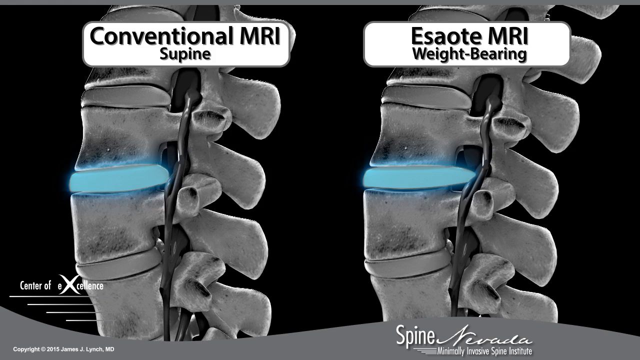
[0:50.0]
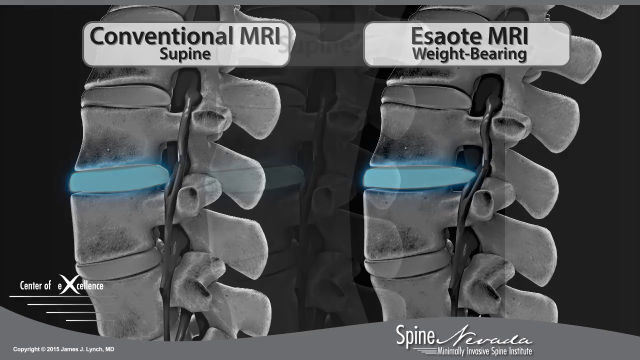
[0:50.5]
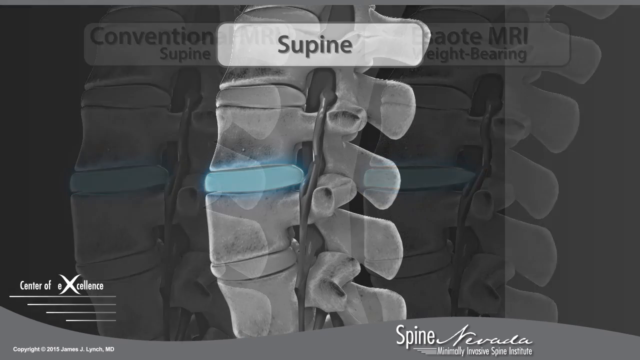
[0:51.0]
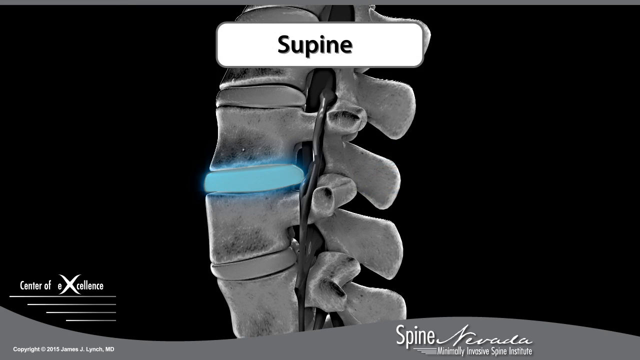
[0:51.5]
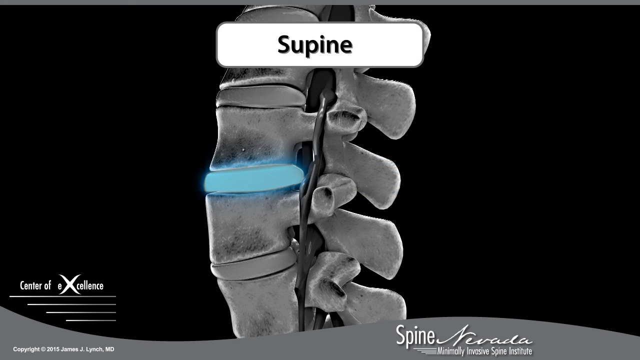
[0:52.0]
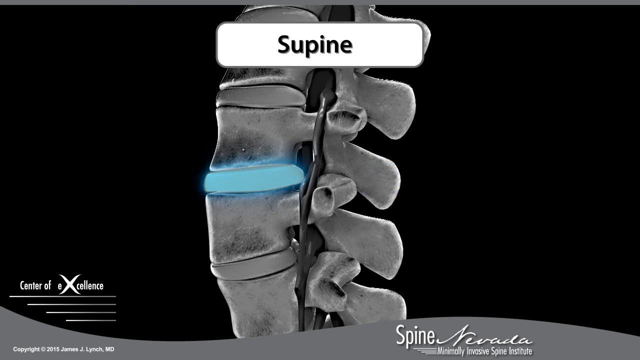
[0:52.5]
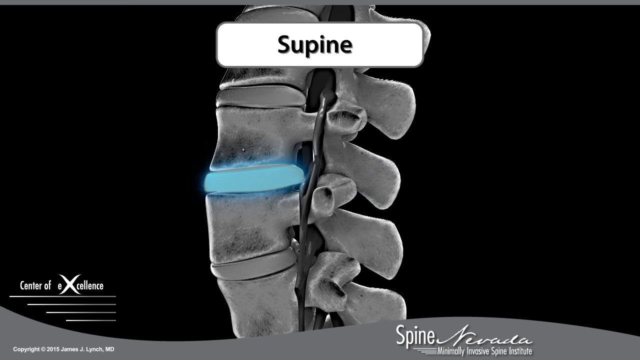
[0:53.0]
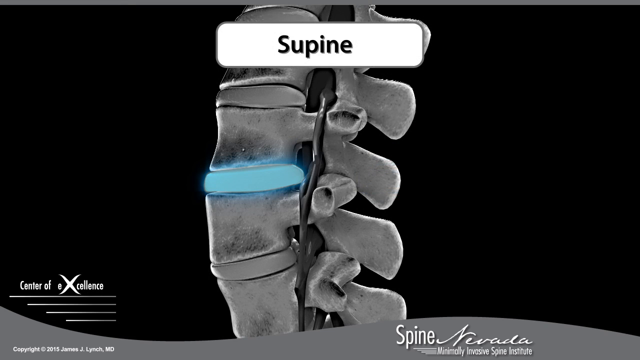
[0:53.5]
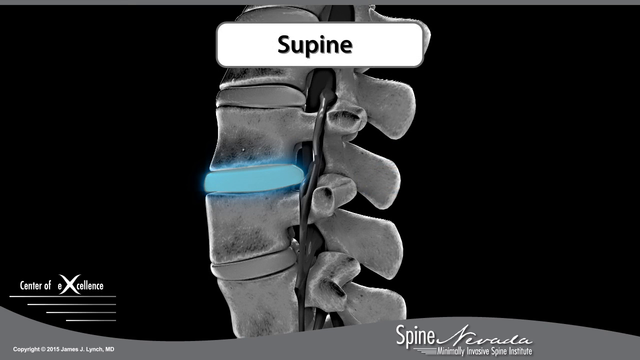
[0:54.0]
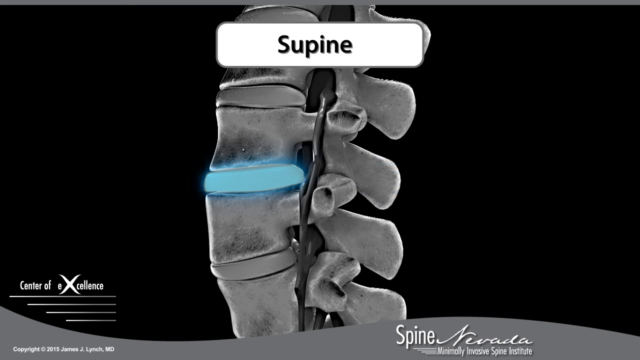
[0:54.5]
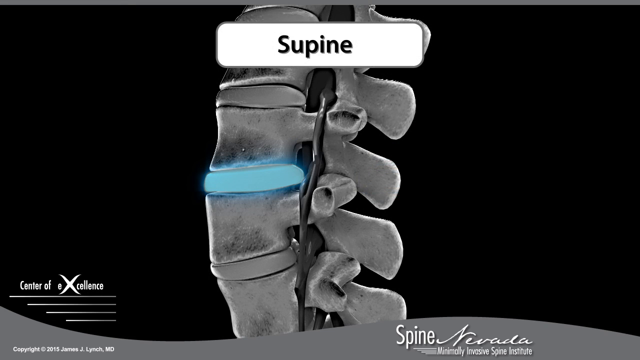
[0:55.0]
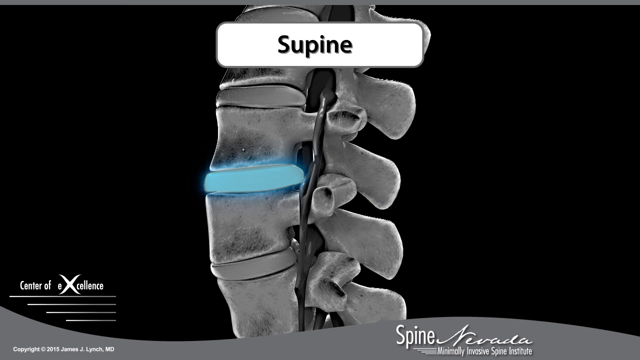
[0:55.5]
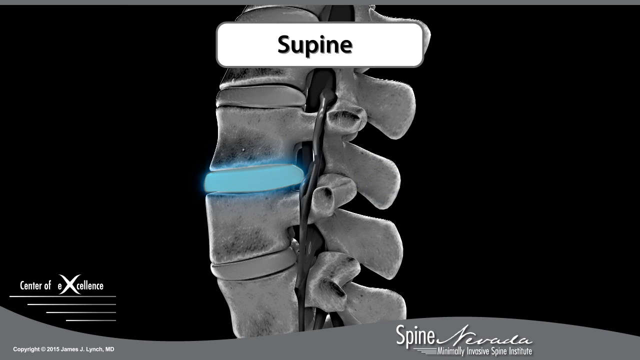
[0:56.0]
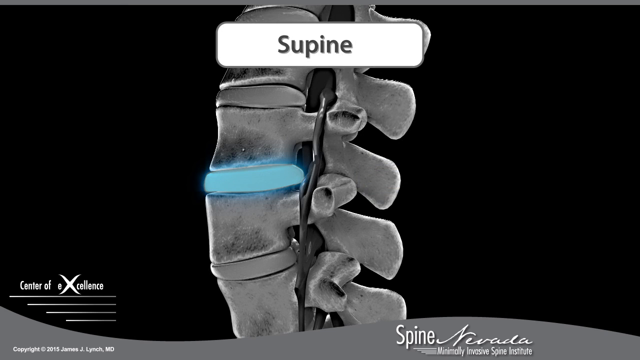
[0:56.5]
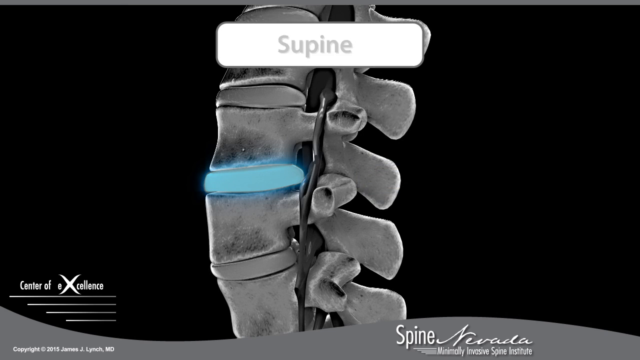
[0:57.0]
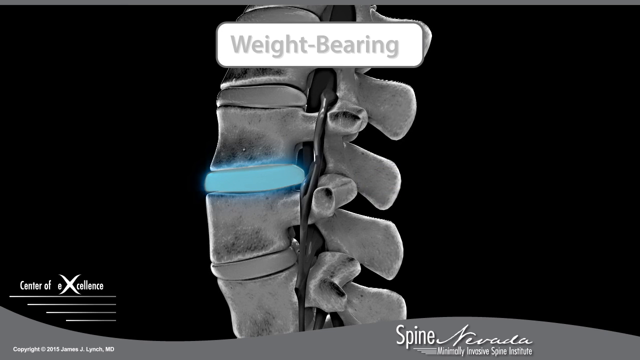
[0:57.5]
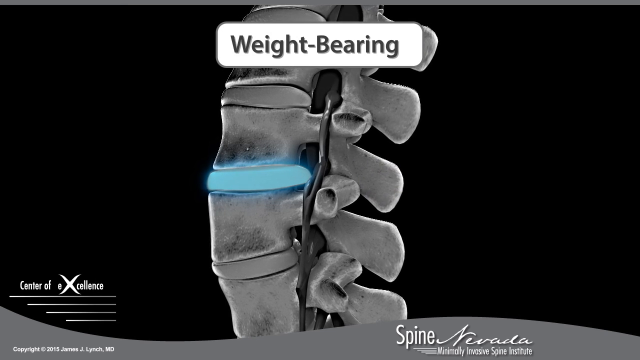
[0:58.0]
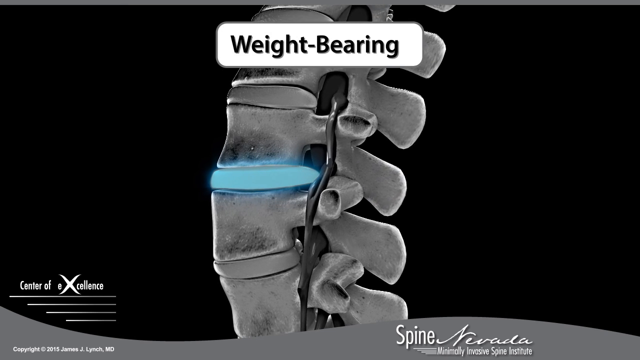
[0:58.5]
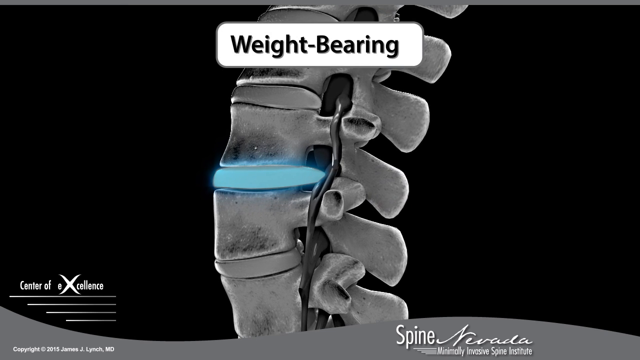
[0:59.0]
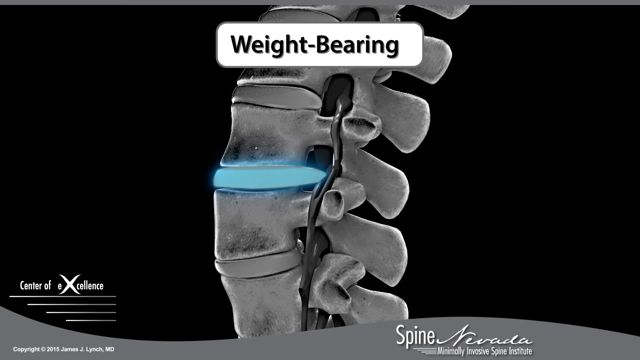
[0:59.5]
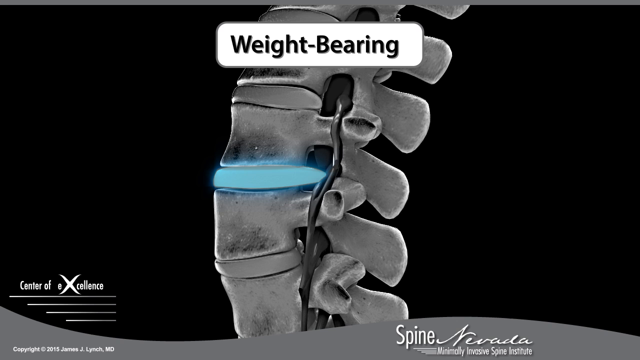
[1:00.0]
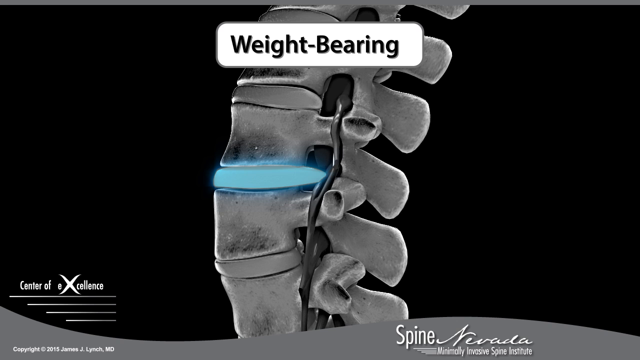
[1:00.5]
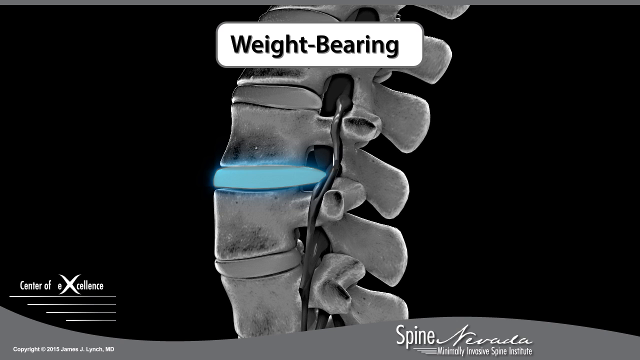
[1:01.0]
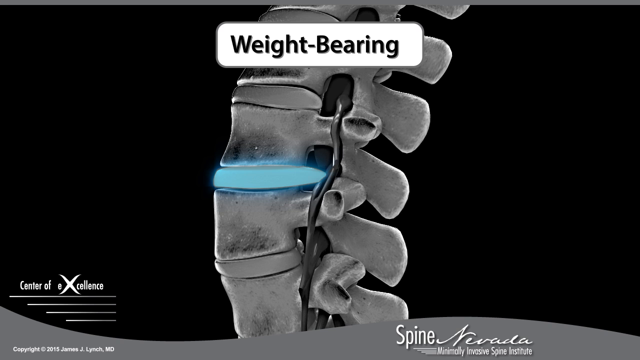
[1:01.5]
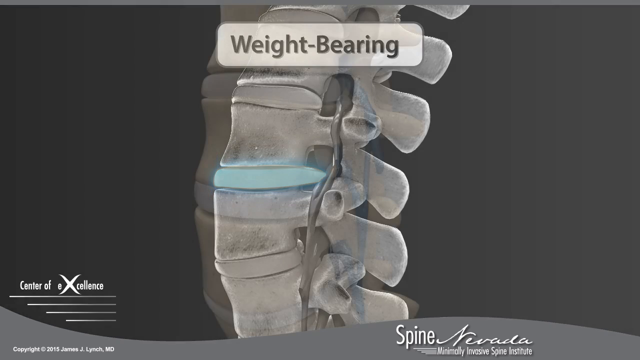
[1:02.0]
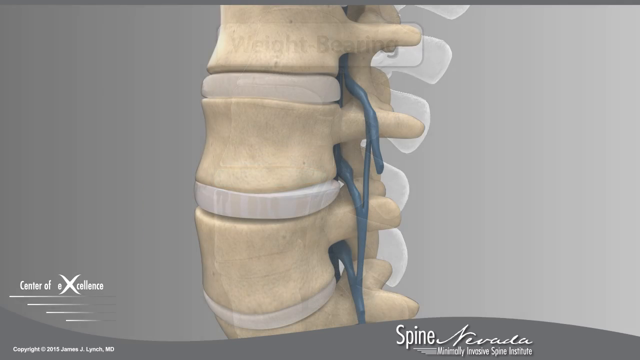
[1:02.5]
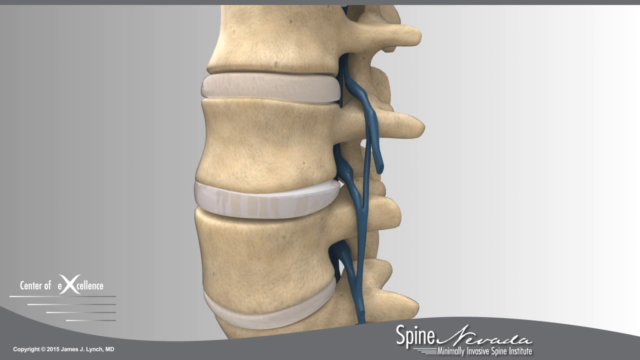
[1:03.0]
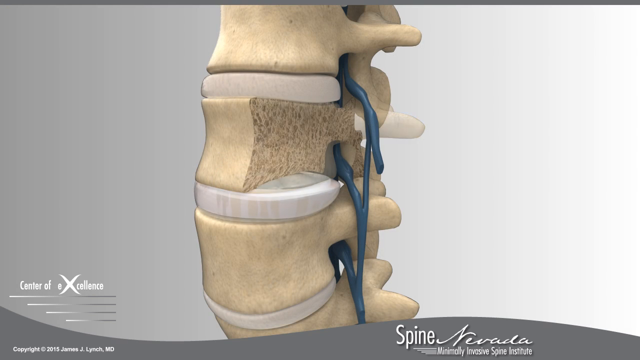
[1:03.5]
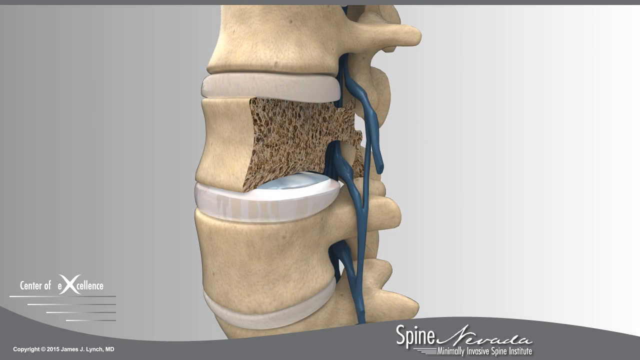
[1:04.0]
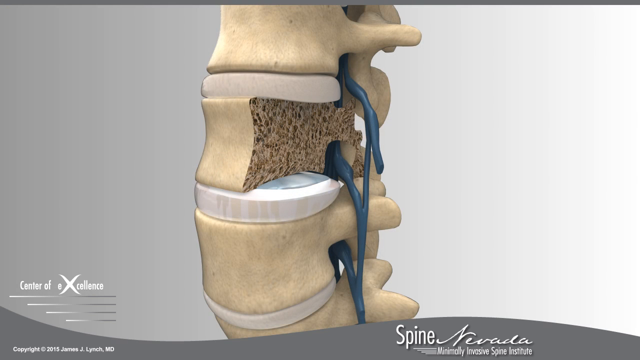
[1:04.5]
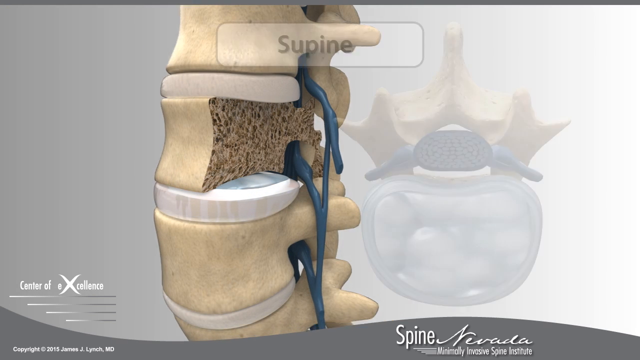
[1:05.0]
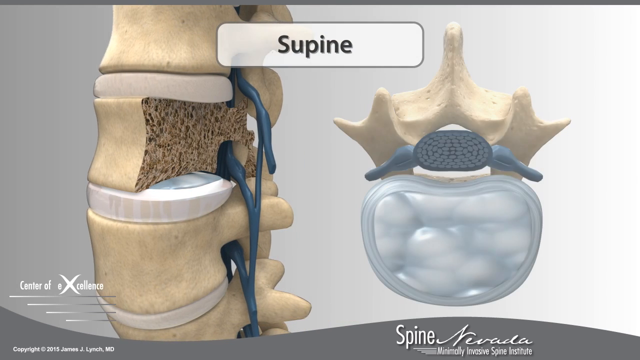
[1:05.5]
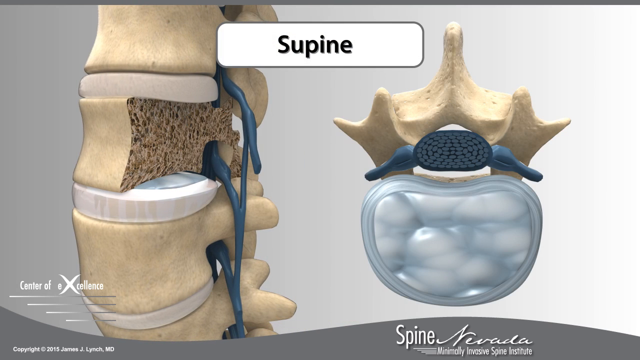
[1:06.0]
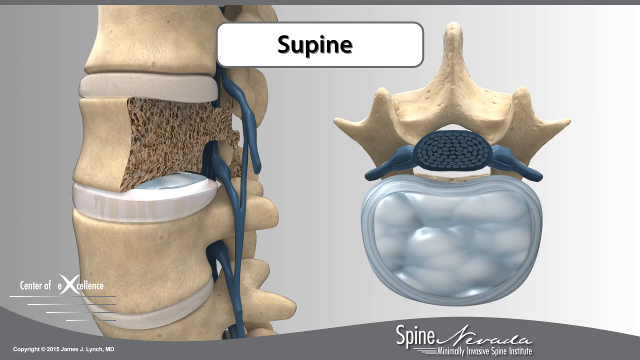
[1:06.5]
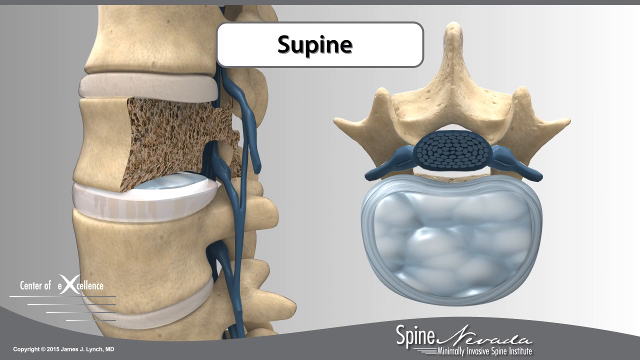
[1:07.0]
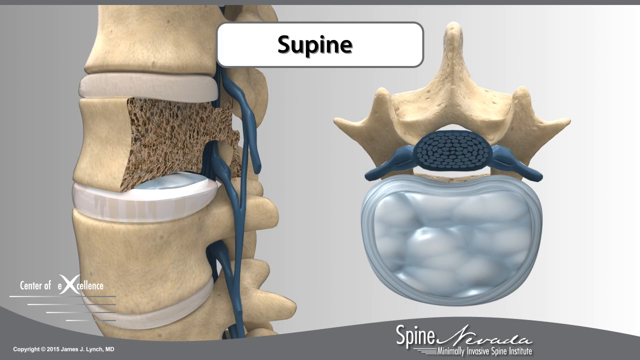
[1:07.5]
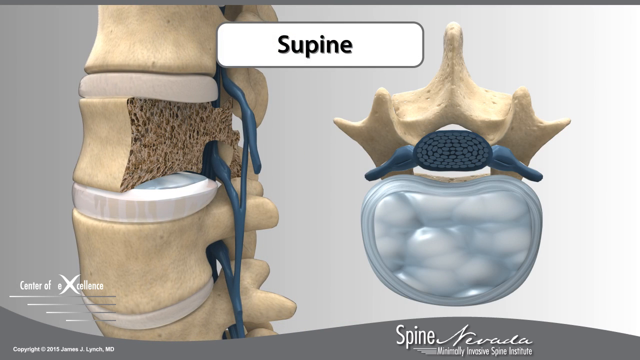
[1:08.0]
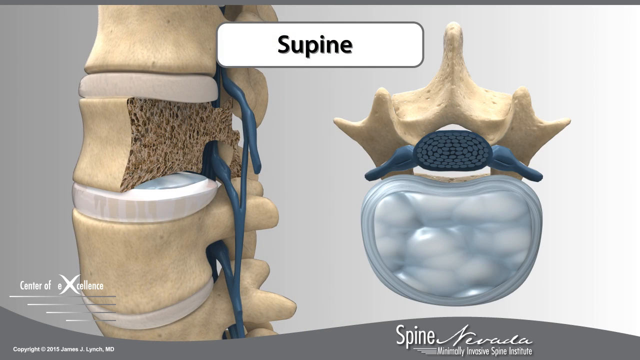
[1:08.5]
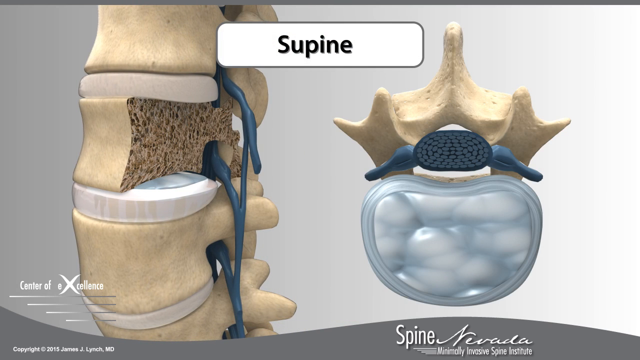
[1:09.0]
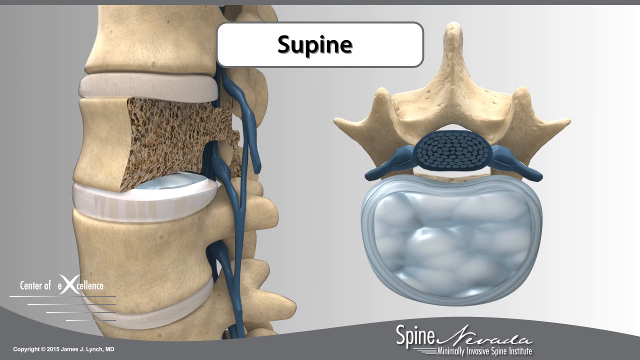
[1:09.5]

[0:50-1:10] A single spine is shown with a white label at the top reading "supine", and one disc is in blue. In the next image the spine leans slightly toward the right and the label reads "weight-bearing". This fades into another screen with a white or gray background and a different type of spine model that looks more like a plastic model. Part of the model is taken away, like a computer-generated image, so the inside of the spine is visible. The spine moves to the left, a cross-section of the spine appears on the right side, and a white label reading "supine" appears at the top of the screen. The same labels for Center of Excellence and Nevada Spine Center are at the bottom of the screen.